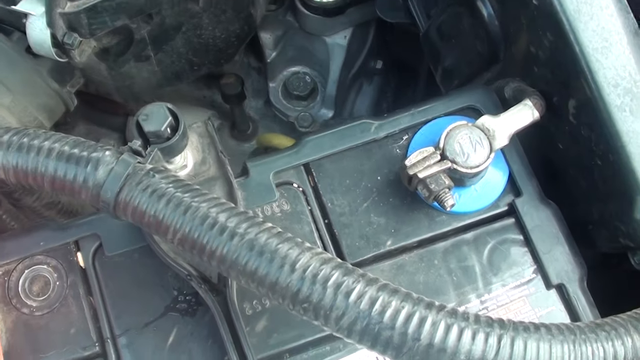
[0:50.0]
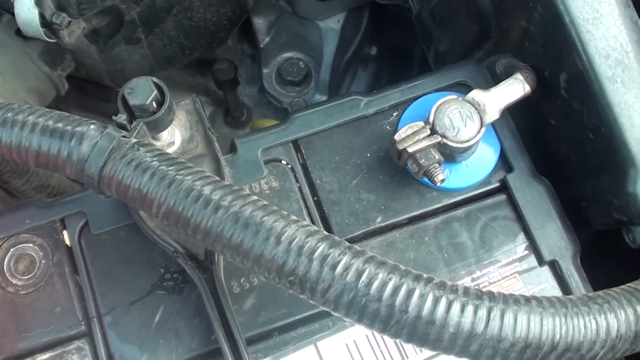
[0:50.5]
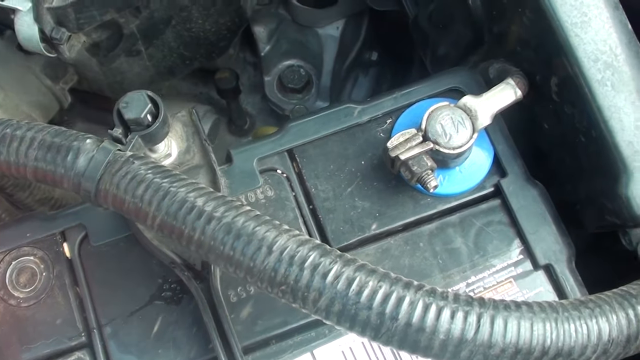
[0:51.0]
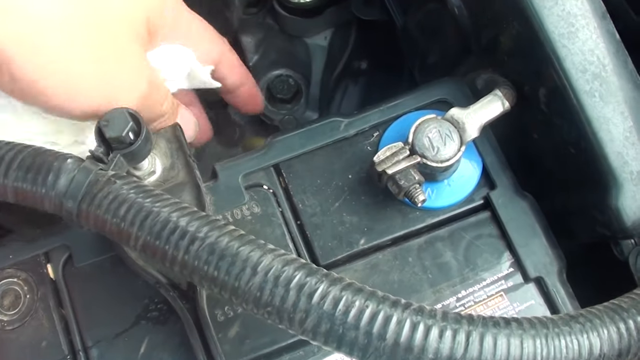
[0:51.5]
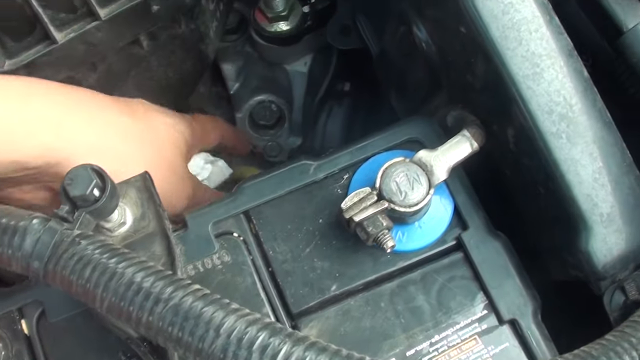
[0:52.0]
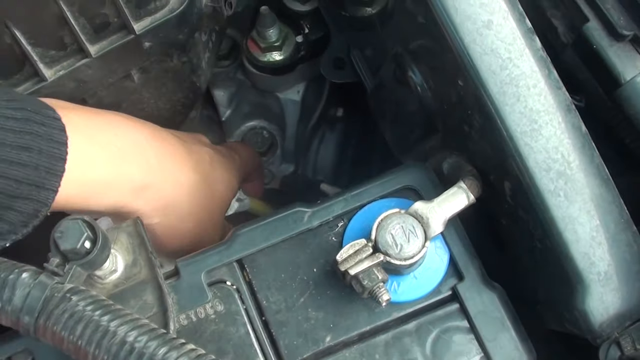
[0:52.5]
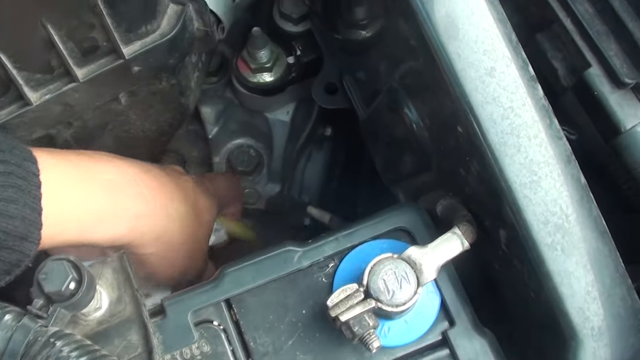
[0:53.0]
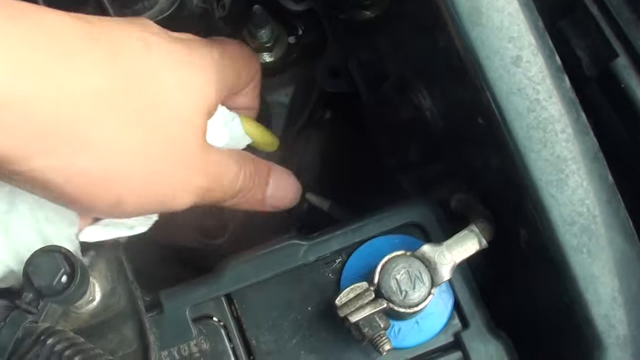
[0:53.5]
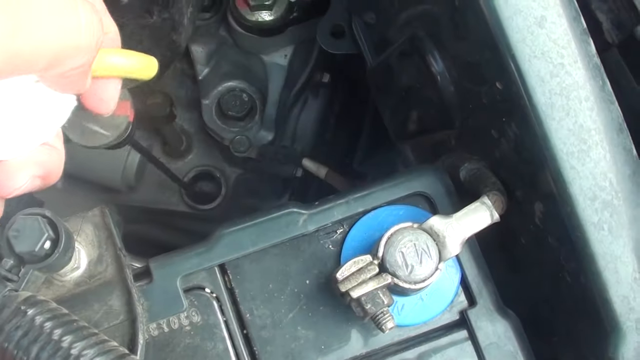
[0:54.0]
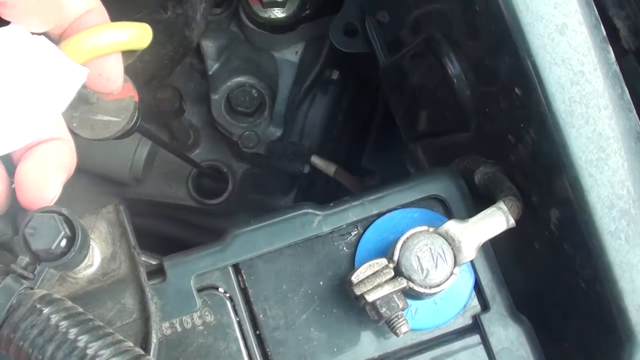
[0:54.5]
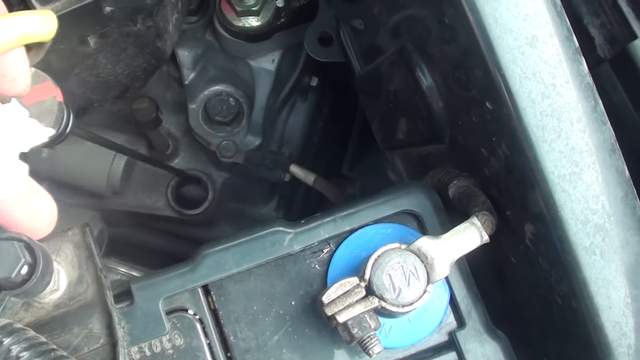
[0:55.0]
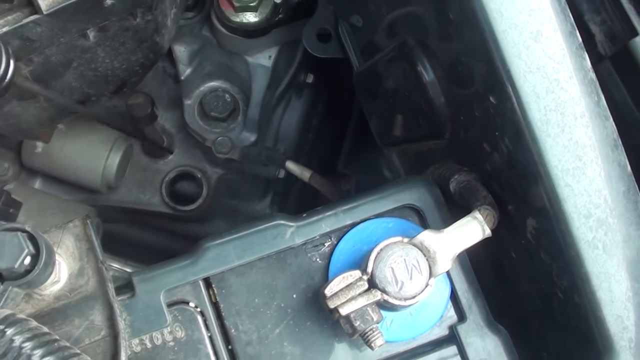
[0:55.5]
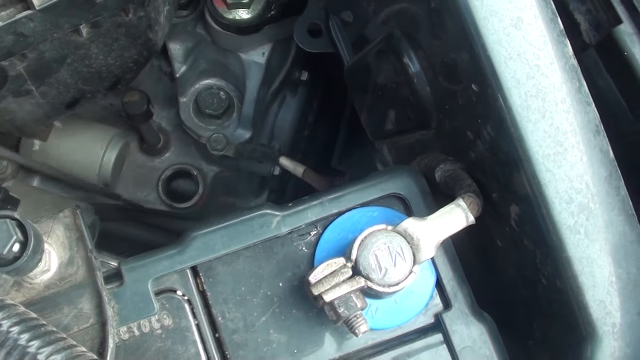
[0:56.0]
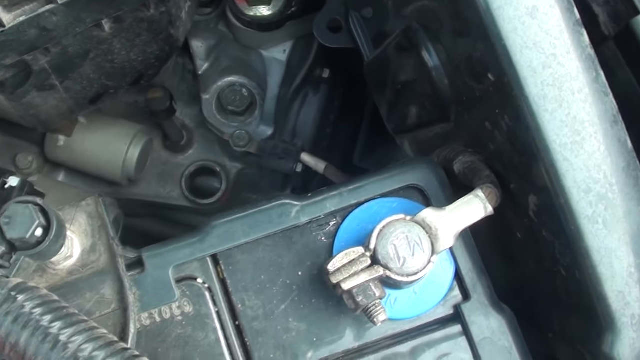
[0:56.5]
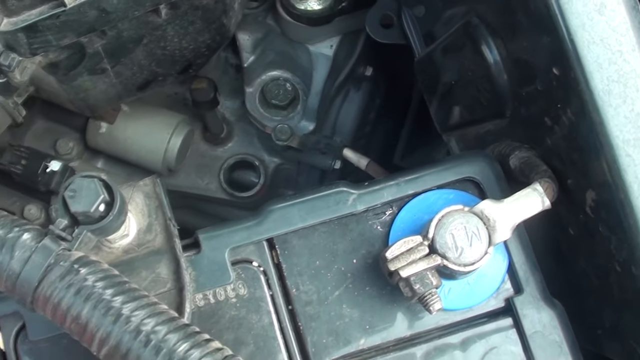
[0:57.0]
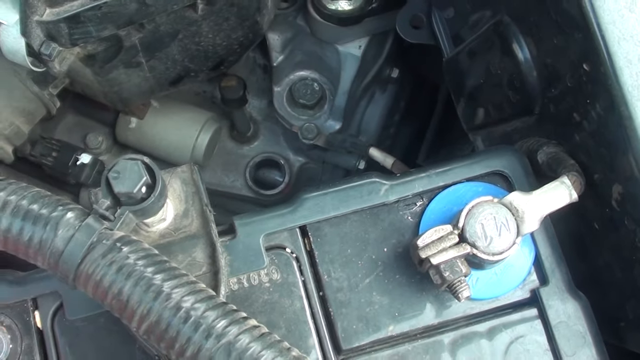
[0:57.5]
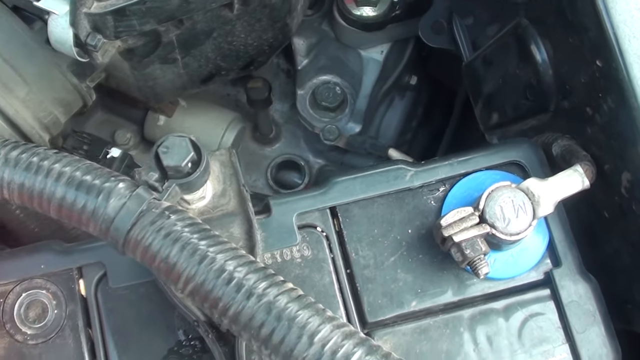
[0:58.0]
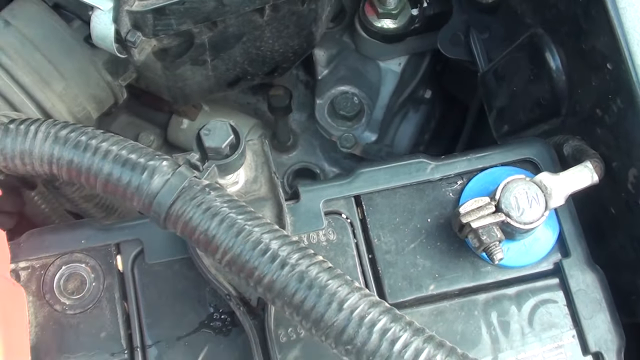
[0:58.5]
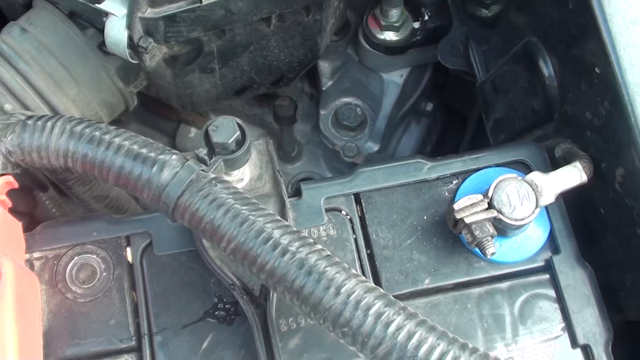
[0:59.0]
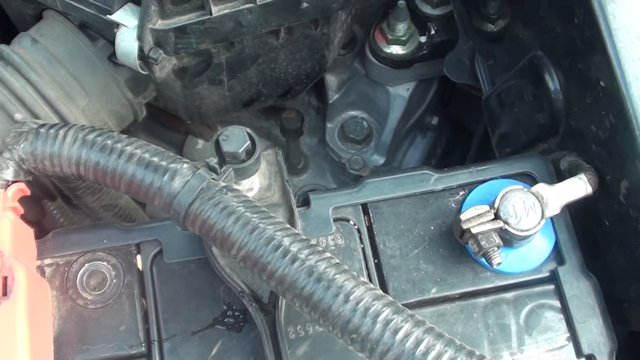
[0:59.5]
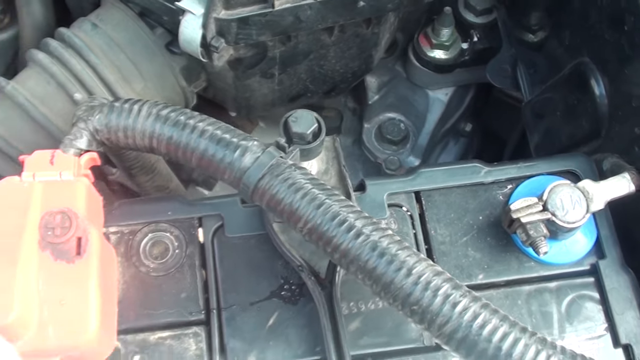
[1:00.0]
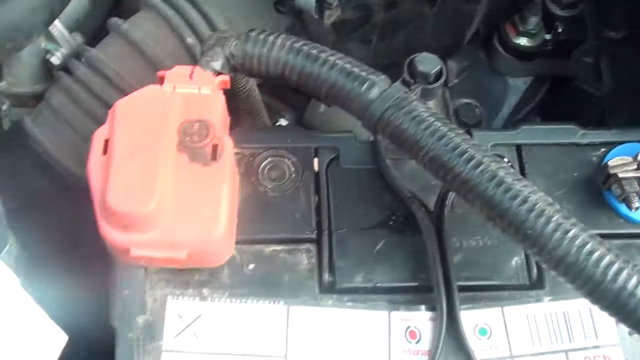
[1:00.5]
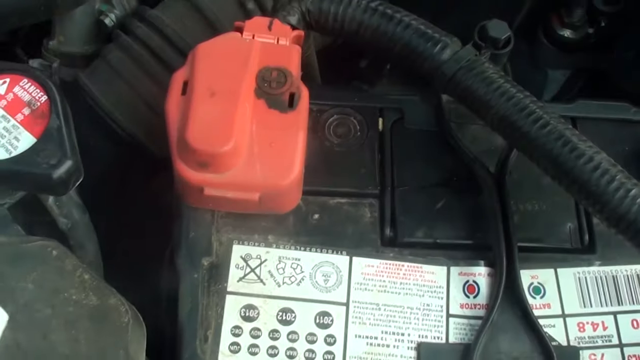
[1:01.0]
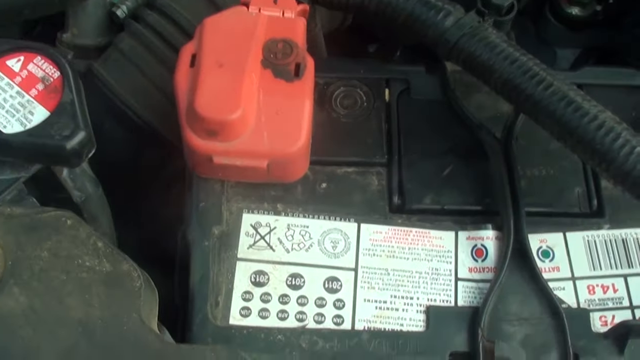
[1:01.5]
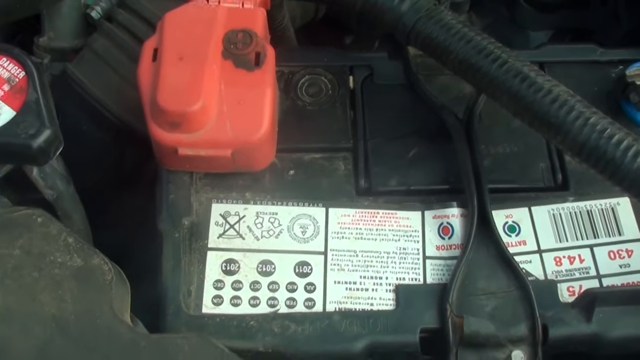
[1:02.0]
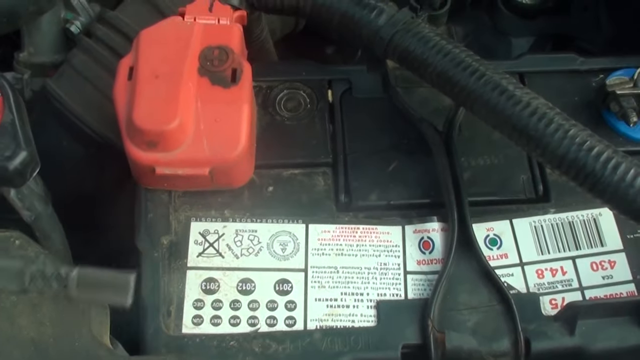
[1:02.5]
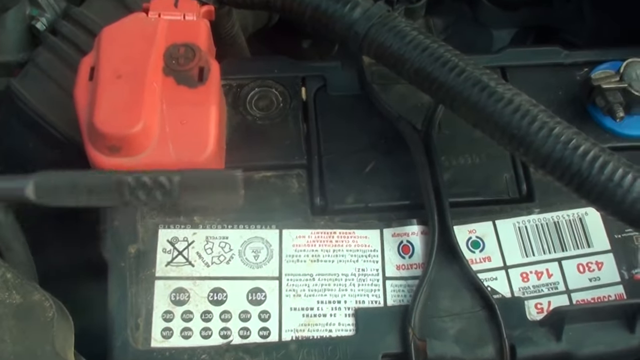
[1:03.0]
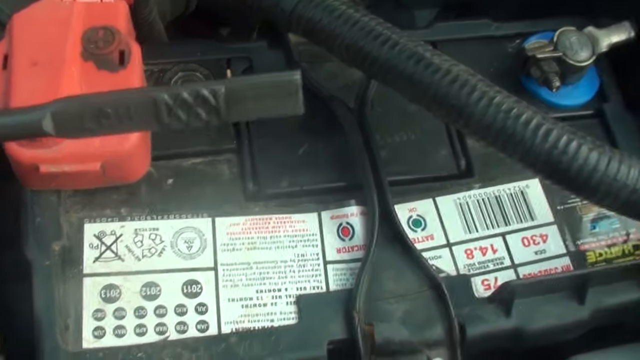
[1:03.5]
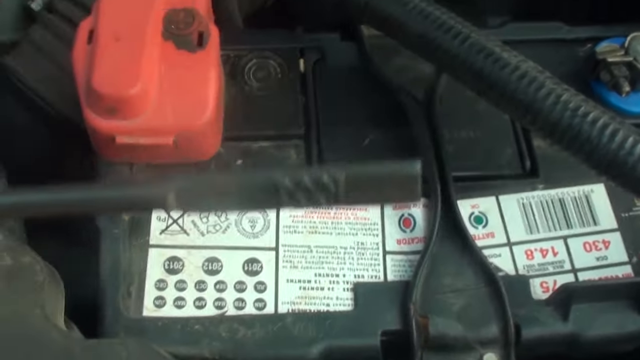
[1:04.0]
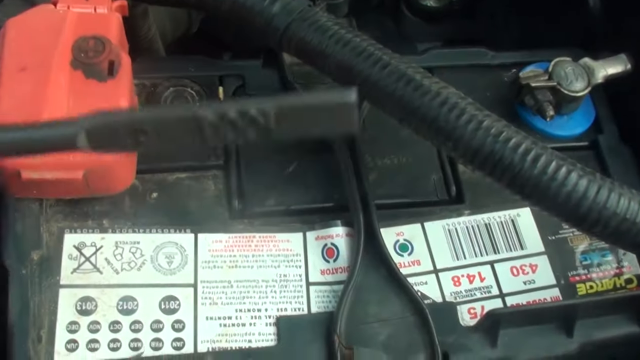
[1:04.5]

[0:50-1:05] Under the hood of a Honda Civic 2007, the camera shows the right side of the battery, apparently one of its metal connectors. There appears to be some writing carved into the top, looking like an M and a T. The connector is bolted, with a blue circle underneath it, and a black tube runs through the center of the screen. A hand holding what looks like a white napkin reaches into view, grabs a yellow handle and pulls it up; this looks like where the oil is measured. As he pulls it up, a small handle pops up with a black bar attached to the end that has some oil on it, and then it disappears from the screen. The camera zooms out somewhat, showing the man doing something with the piece of paper, and then he shows the oil gauge to the camera so it can see how much oil is left in the car.